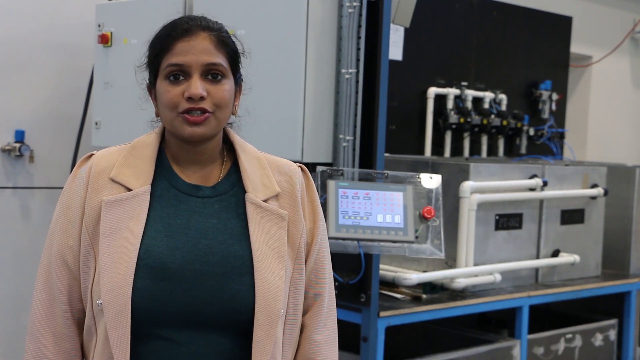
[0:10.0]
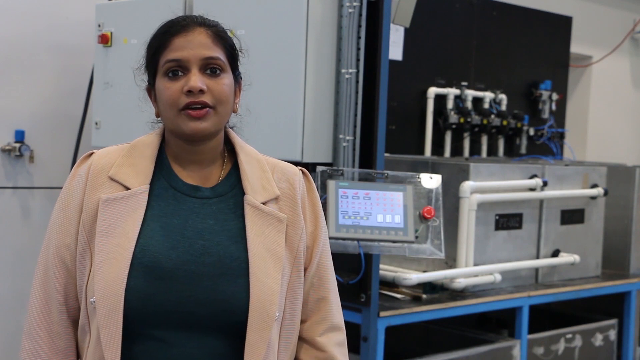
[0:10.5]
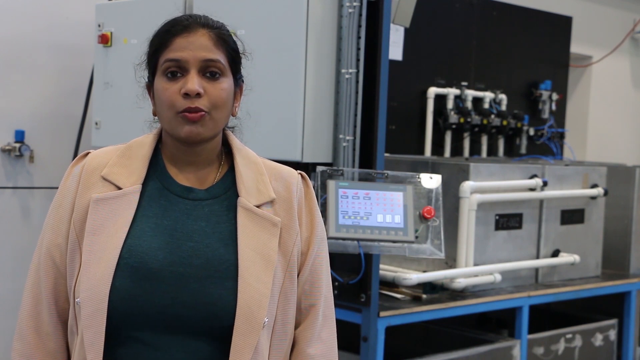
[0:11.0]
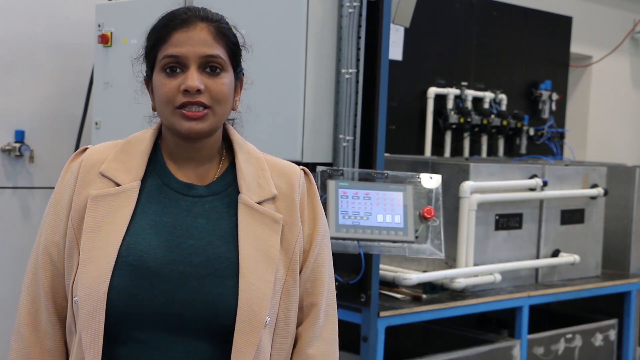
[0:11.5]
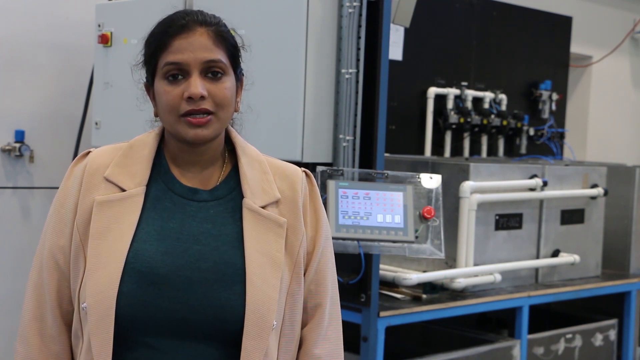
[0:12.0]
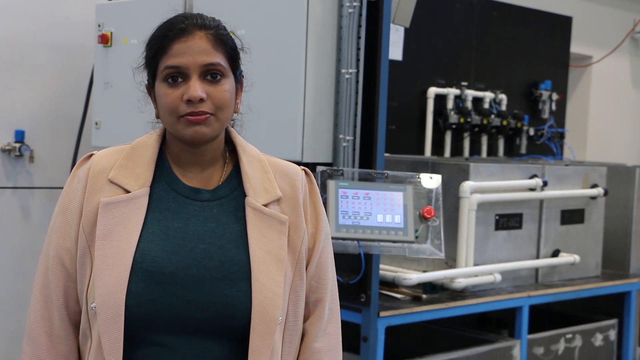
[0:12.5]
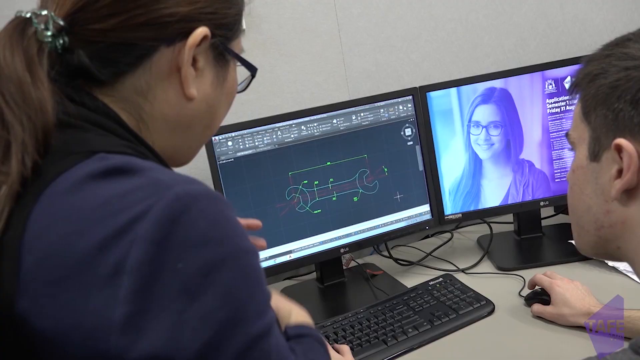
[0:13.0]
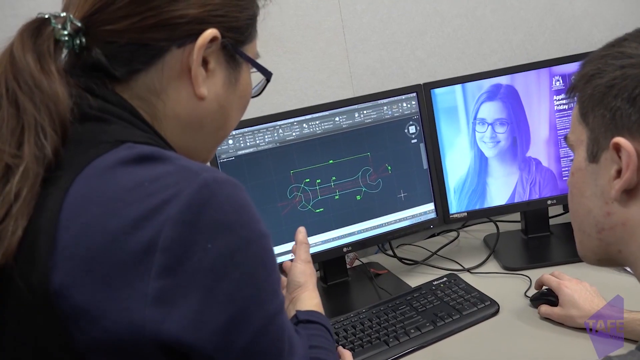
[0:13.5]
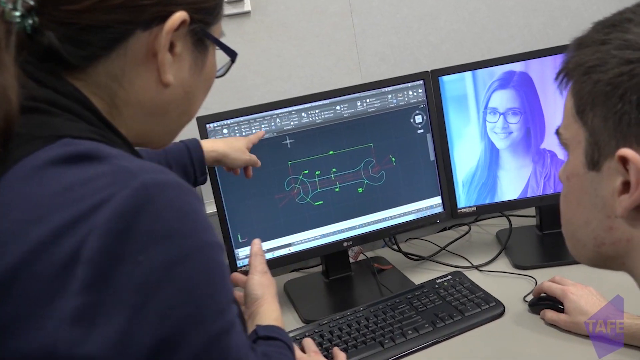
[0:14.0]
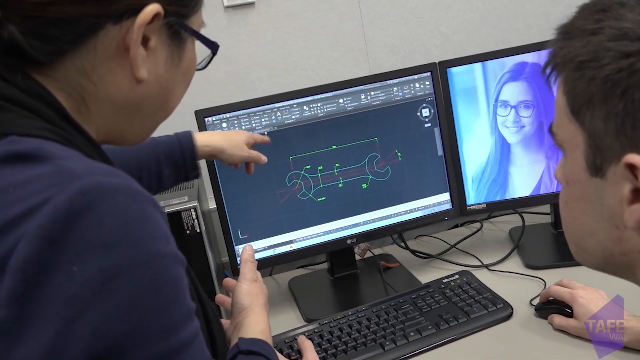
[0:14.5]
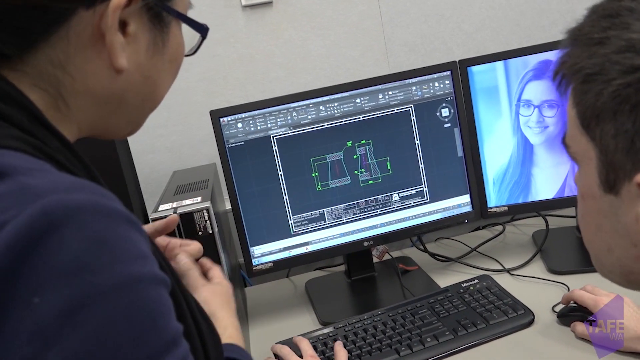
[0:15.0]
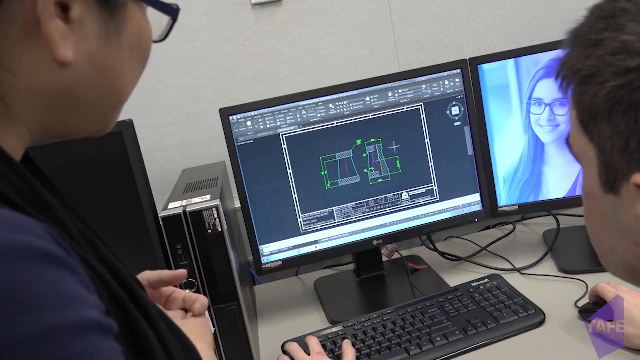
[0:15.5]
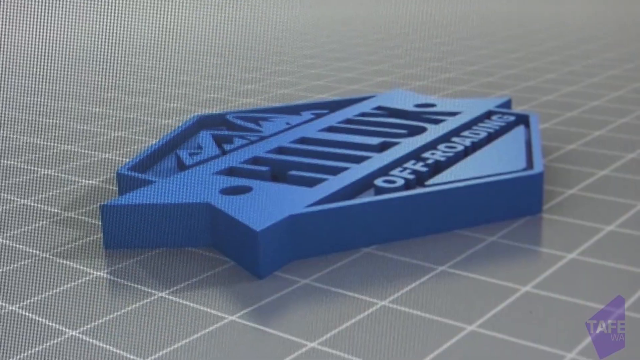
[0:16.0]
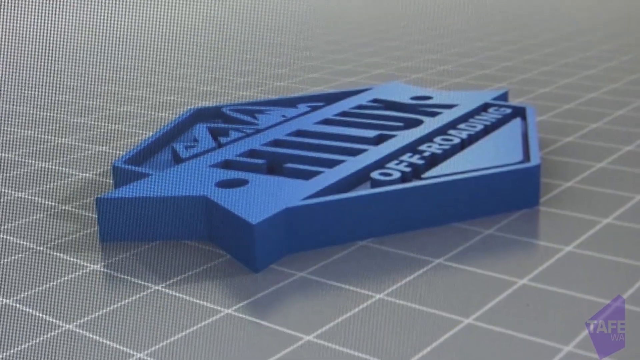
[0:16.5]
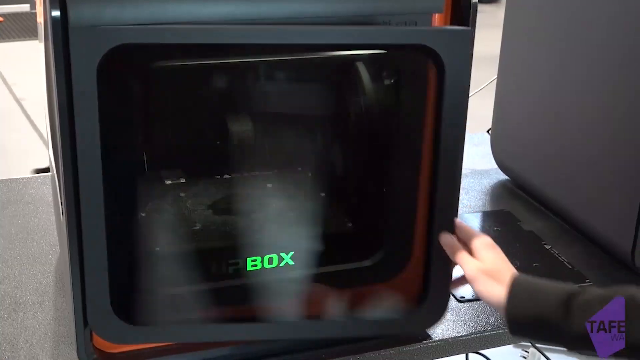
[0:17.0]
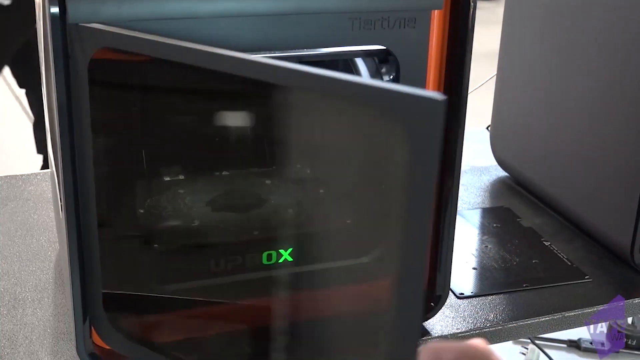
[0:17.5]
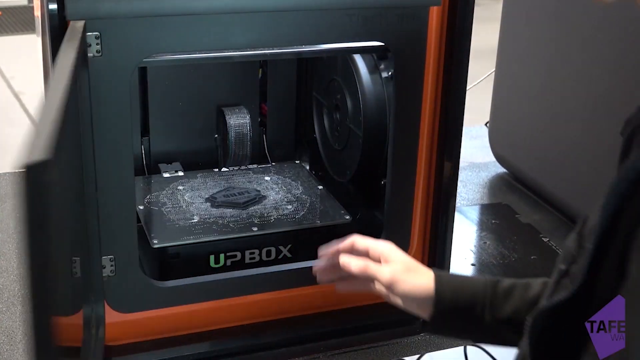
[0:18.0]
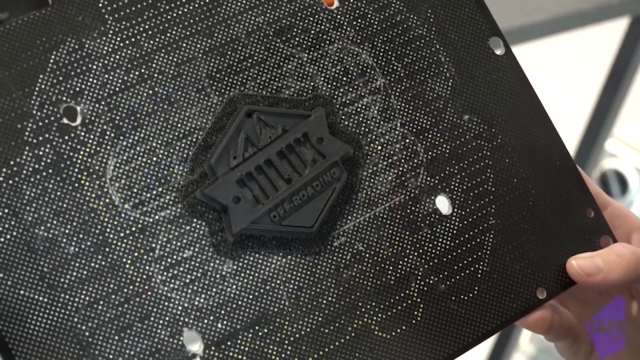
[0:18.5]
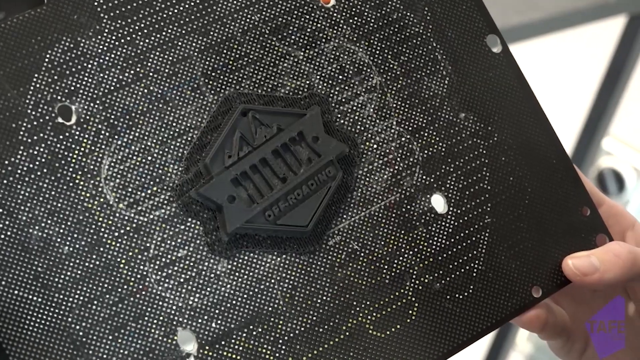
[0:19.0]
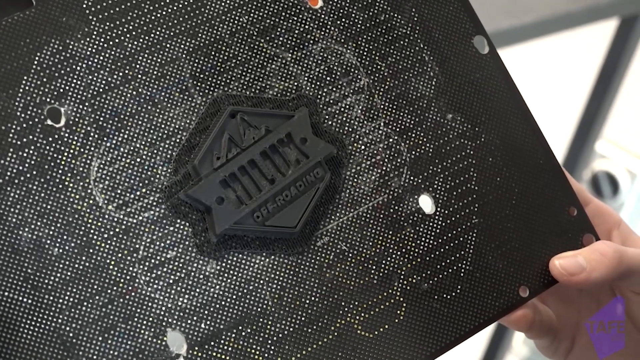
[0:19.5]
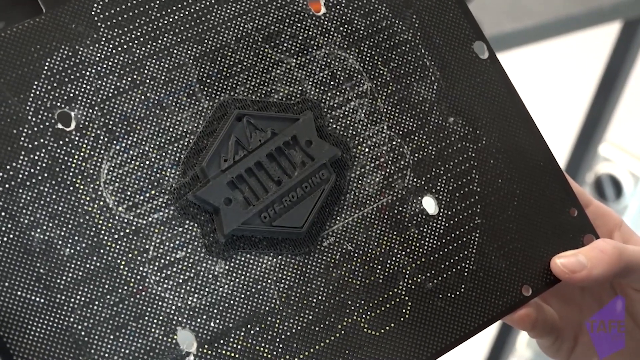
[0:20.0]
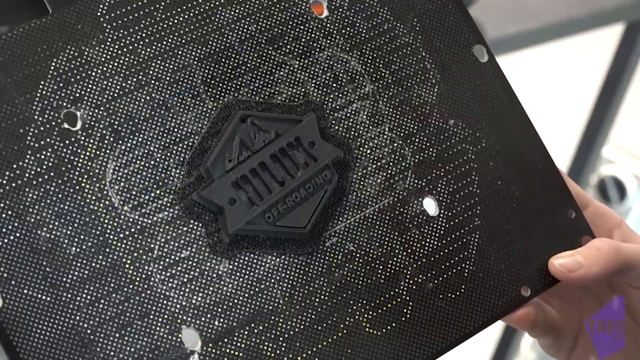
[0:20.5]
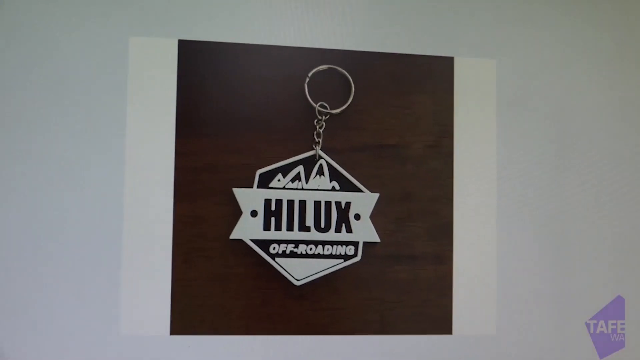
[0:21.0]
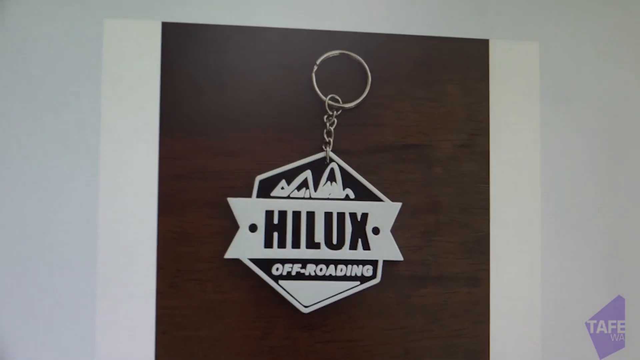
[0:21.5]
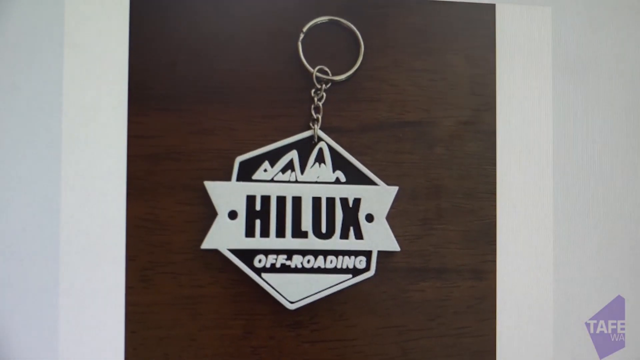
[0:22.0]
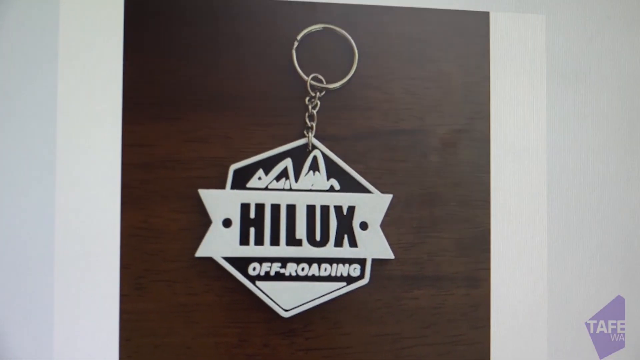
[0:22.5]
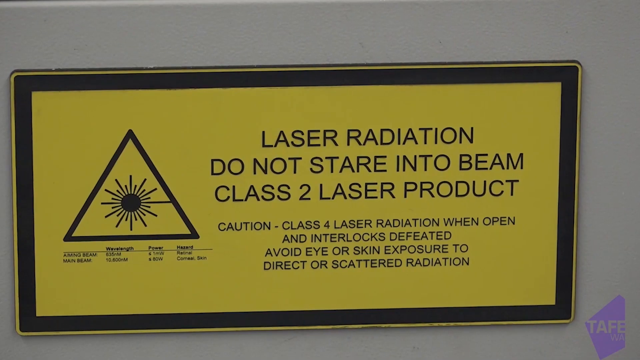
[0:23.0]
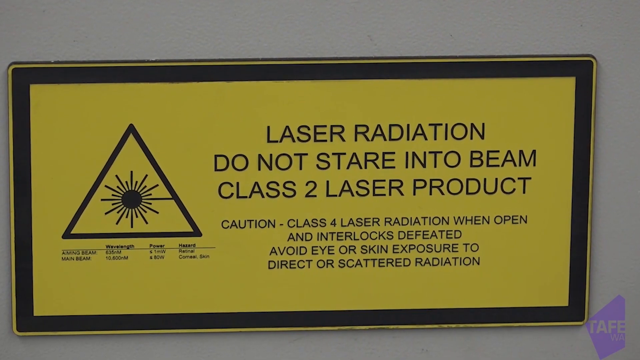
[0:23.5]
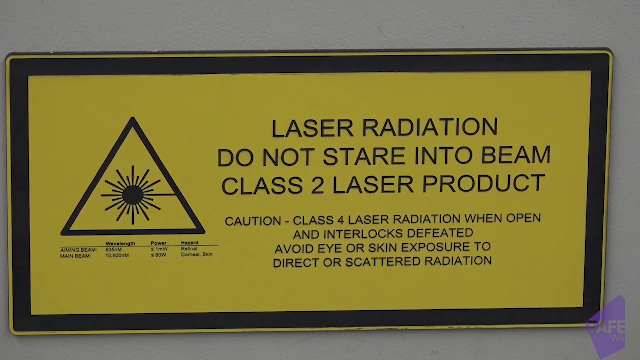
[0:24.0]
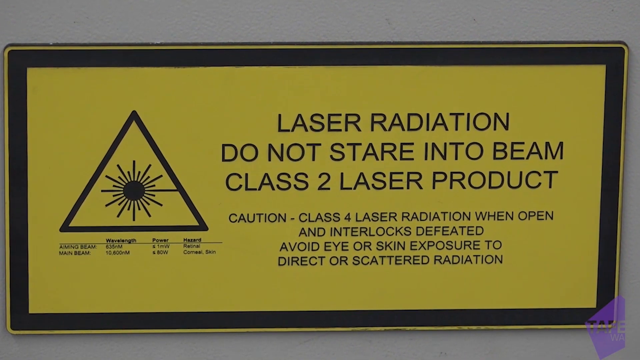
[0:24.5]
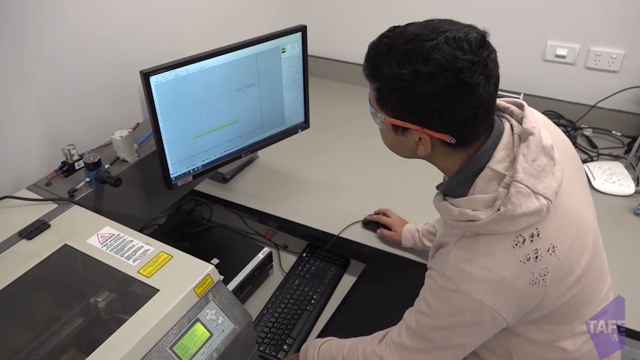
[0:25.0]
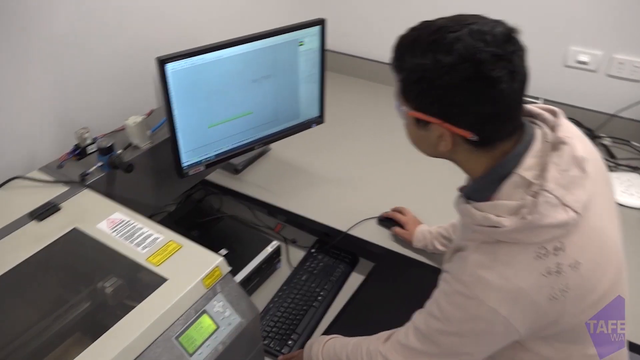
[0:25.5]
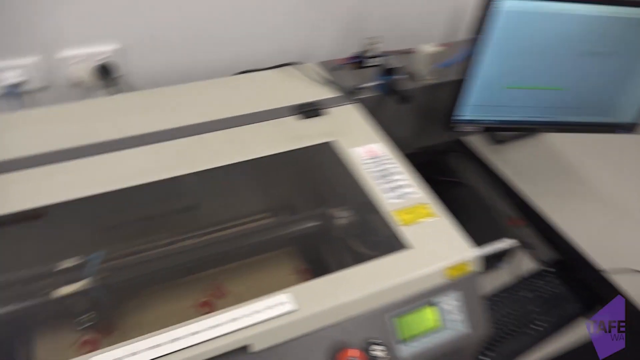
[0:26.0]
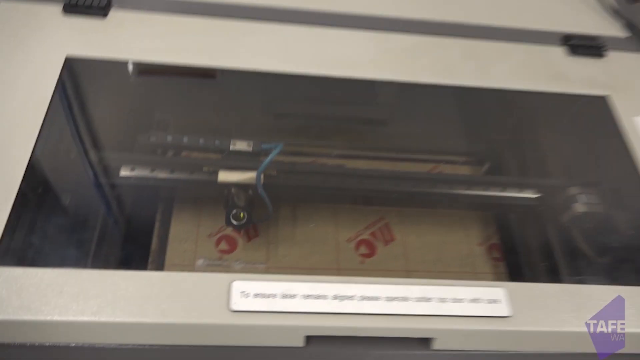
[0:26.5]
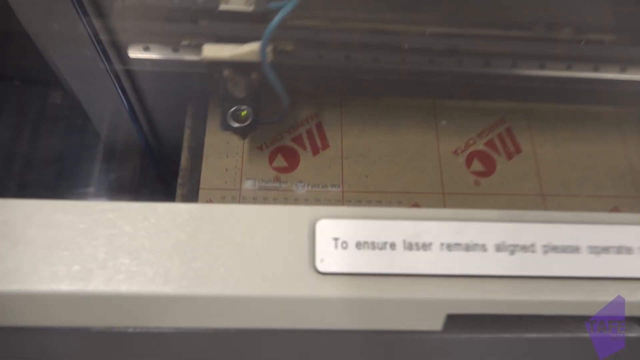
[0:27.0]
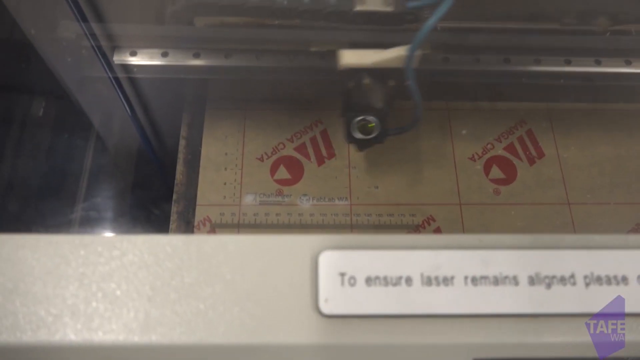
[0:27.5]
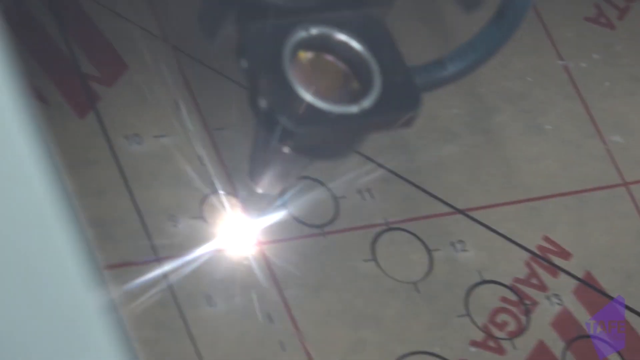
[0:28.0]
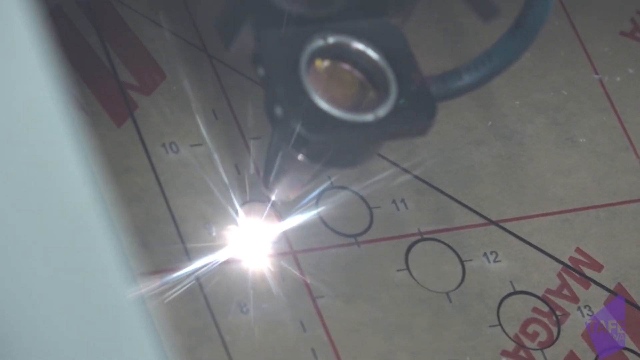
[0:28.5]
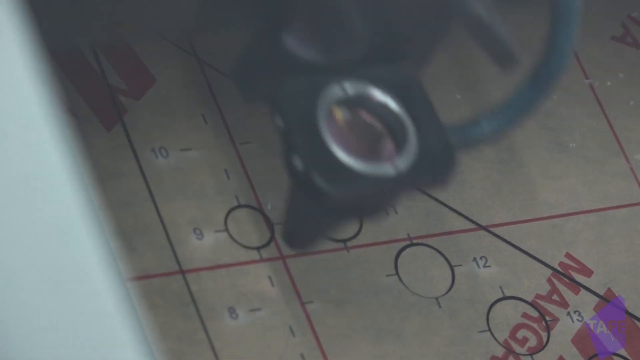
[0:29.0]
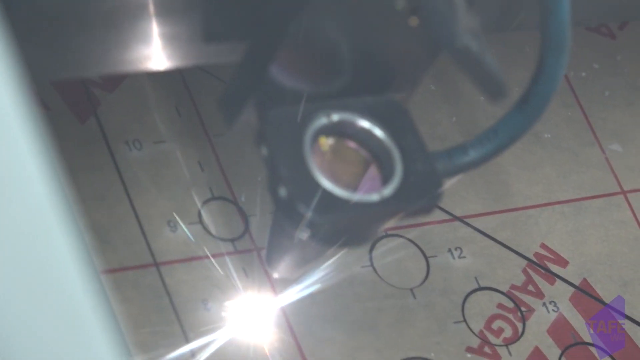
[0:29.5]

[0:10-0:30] The woman lecturer appears, wearing a green sweater, a chain around her neck, earrings and a tannish orange blazer over the sweater. She is kind of stocky and large-chested, and looks like she is probably from Pakistan. Her dark black hair is parted kind of to the right, pulled back and sticking up a little. She talks for just a couple of seconds, then the scene switches to two people working on a laptop that has two screens, one showing a picture of a girl. A warning reads "laser radiation, do not stare into." A laser machine is shown briefly while working, printing things very precisely. The woman talking to the man wears glasses, and they both look like they might be Oriental. There is a key chain with text on it. The computer screen looks like it shows a picture of a ranch. Text reads "do not stare at the laser will damage eyes." Every section is very short.